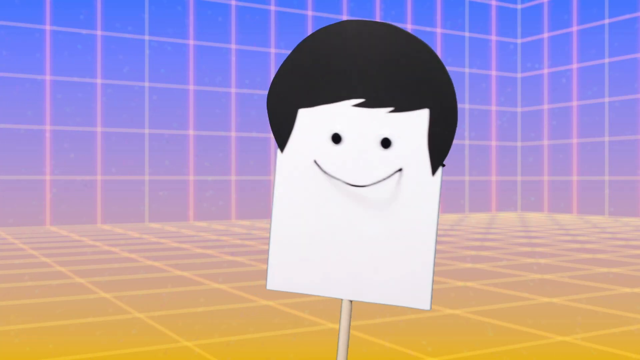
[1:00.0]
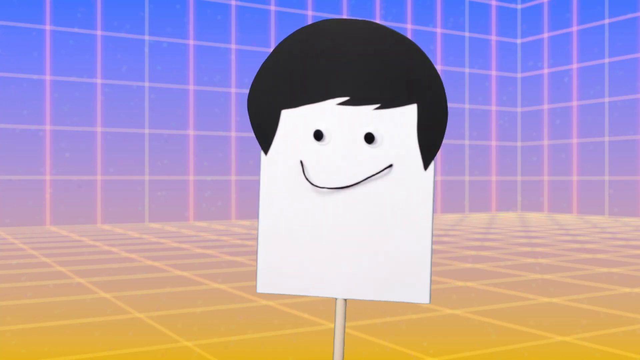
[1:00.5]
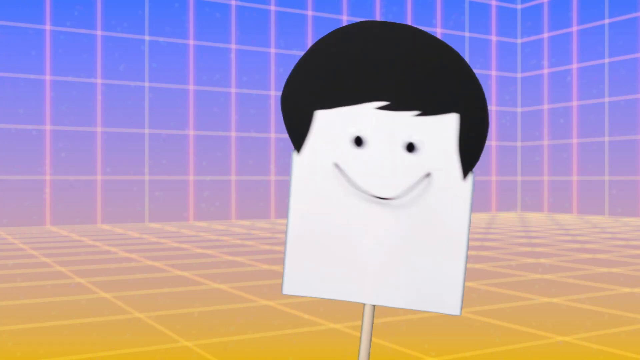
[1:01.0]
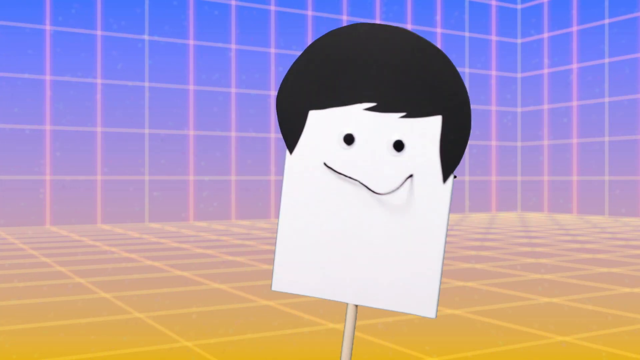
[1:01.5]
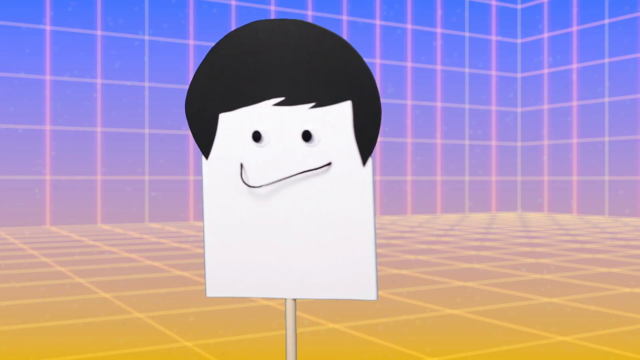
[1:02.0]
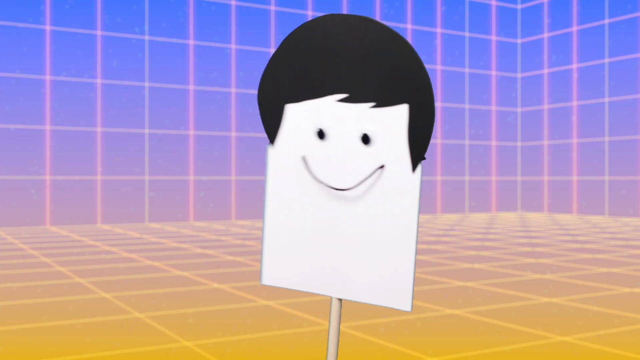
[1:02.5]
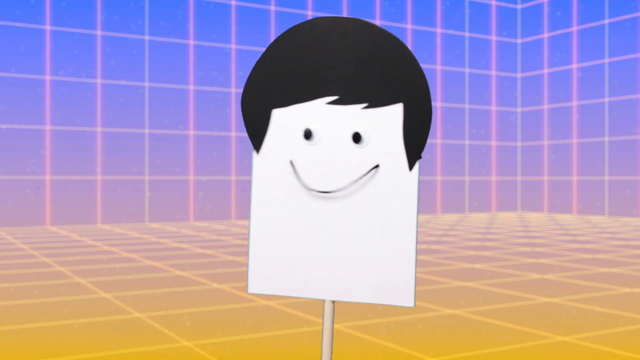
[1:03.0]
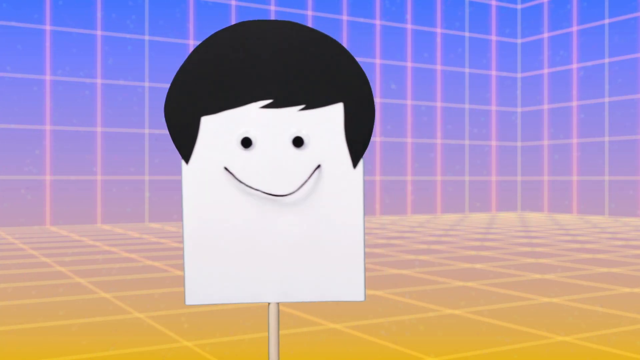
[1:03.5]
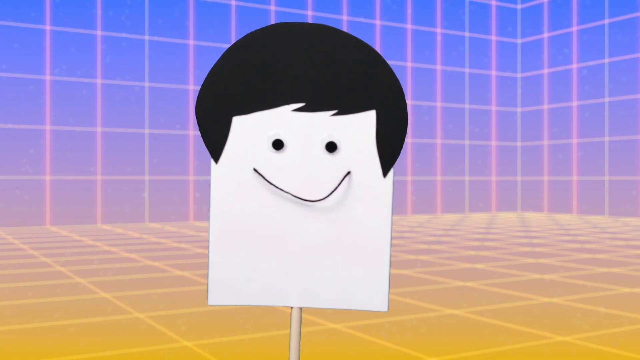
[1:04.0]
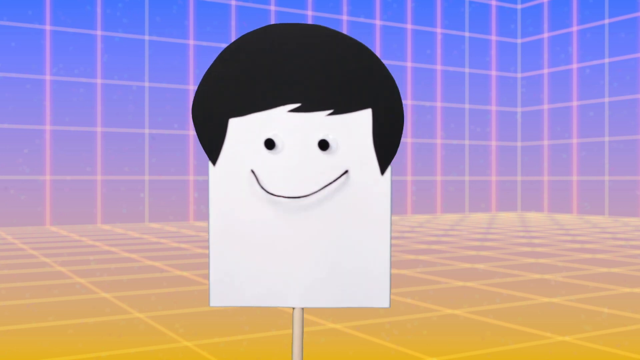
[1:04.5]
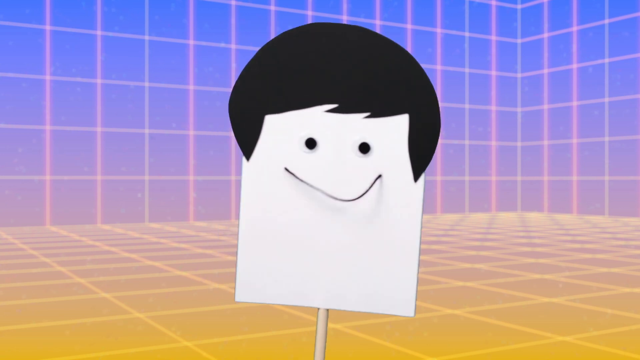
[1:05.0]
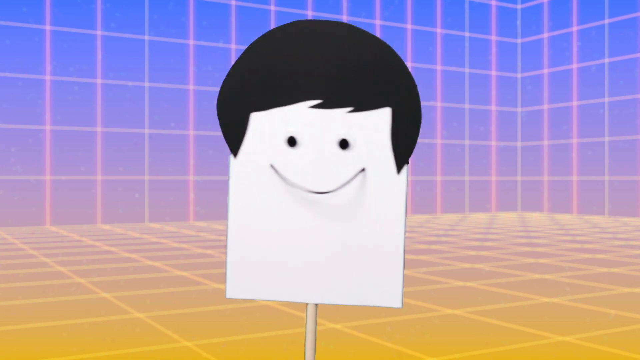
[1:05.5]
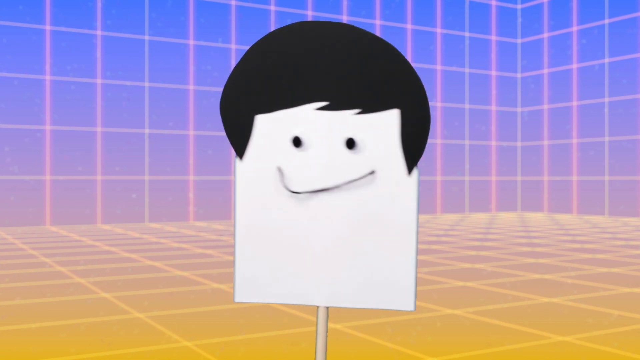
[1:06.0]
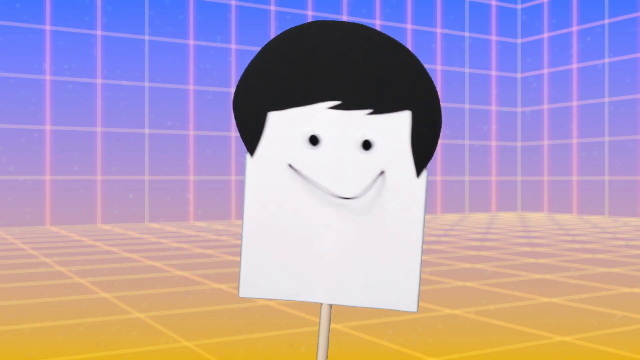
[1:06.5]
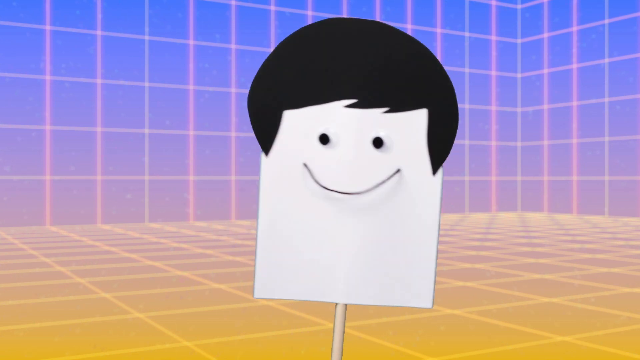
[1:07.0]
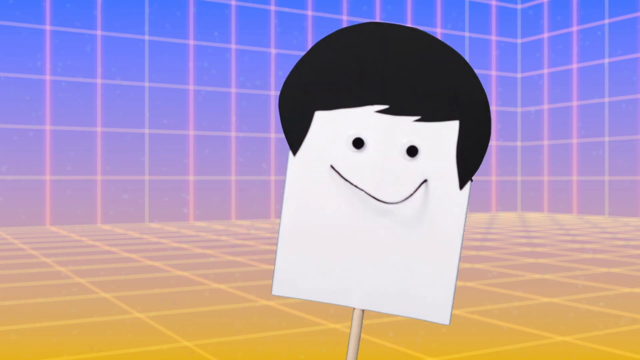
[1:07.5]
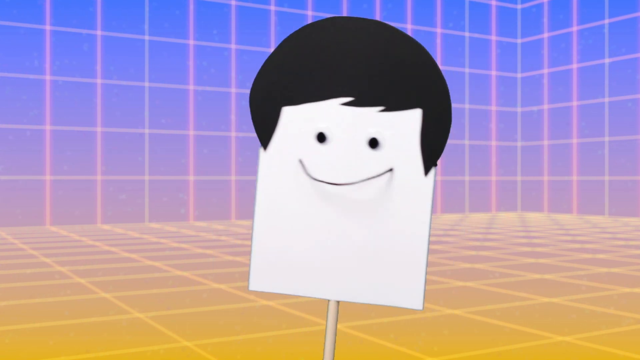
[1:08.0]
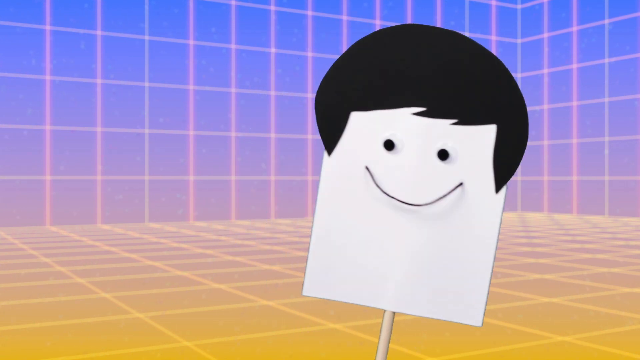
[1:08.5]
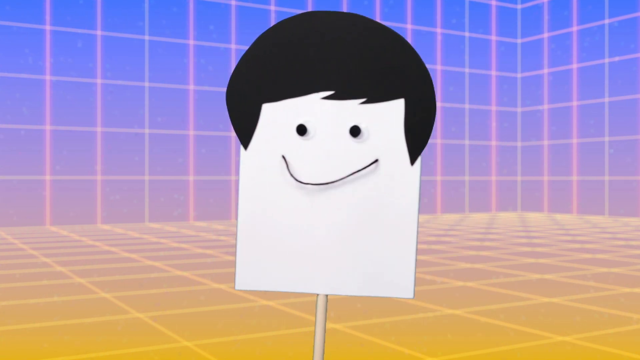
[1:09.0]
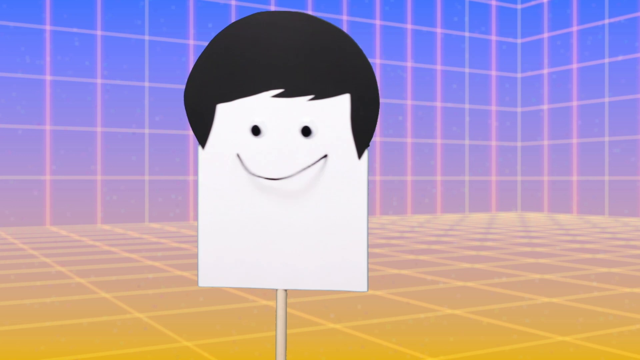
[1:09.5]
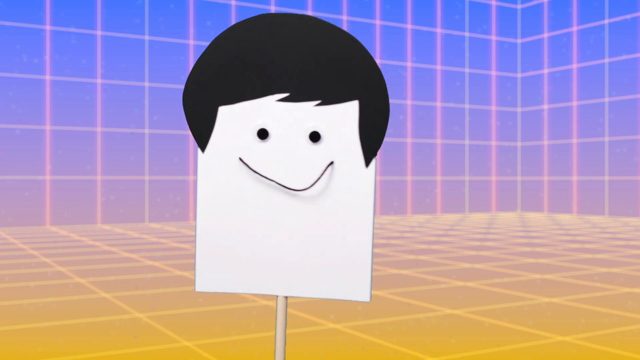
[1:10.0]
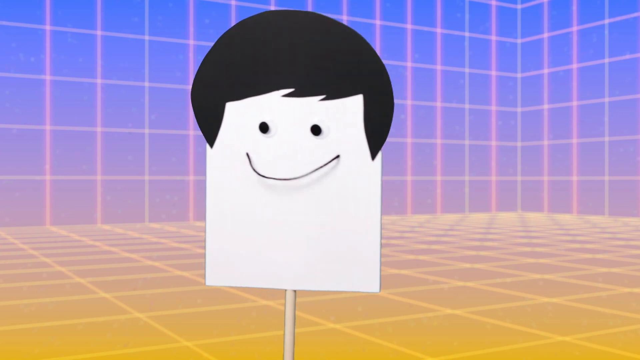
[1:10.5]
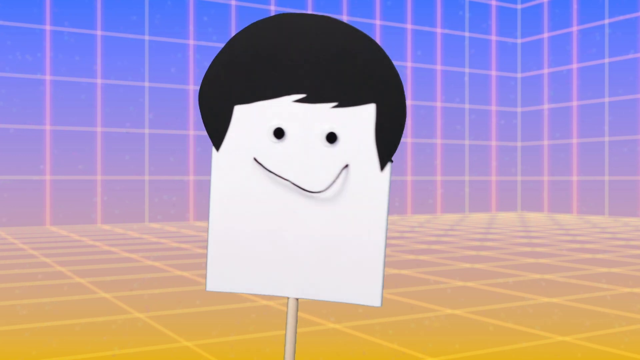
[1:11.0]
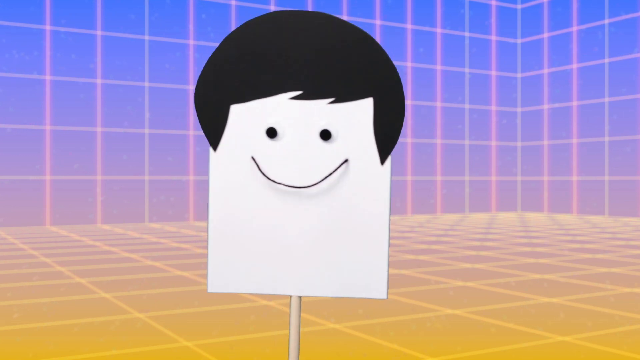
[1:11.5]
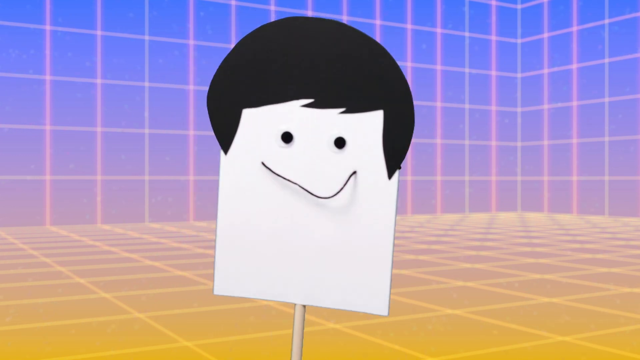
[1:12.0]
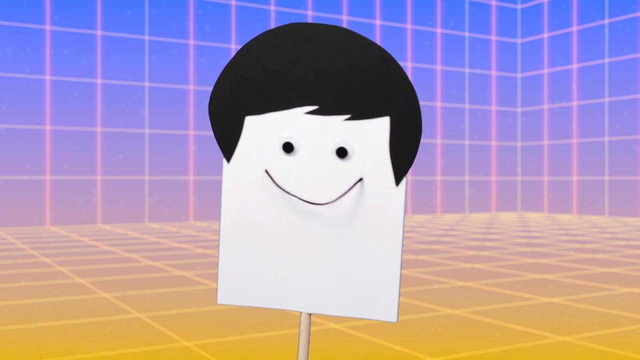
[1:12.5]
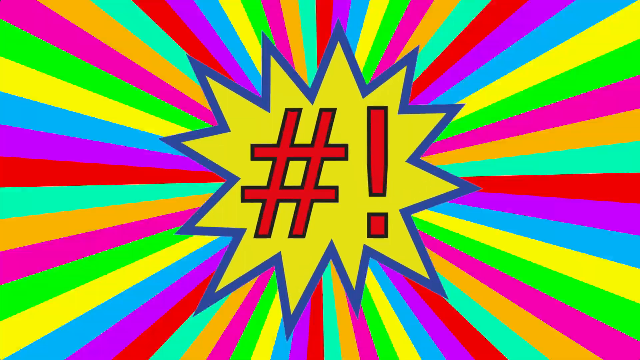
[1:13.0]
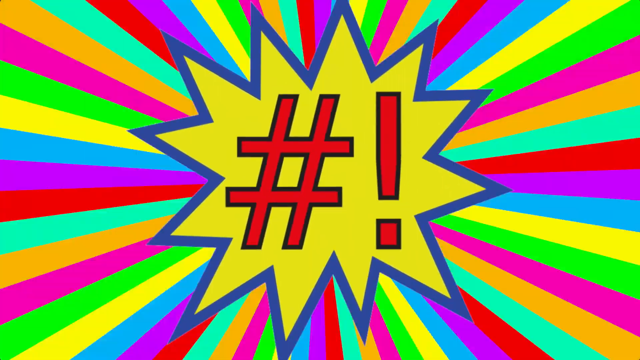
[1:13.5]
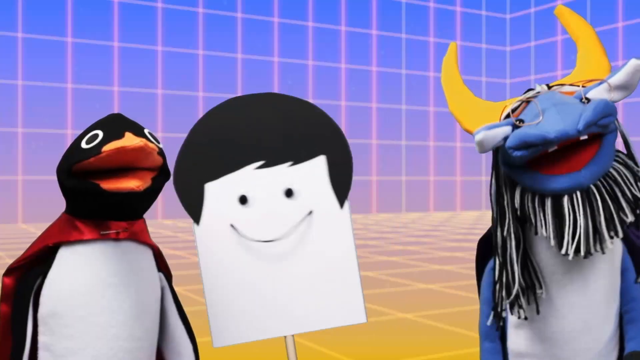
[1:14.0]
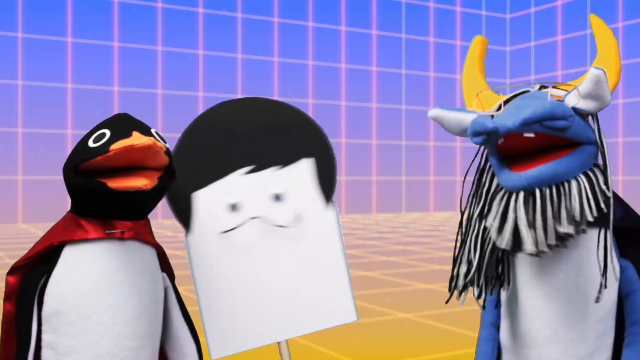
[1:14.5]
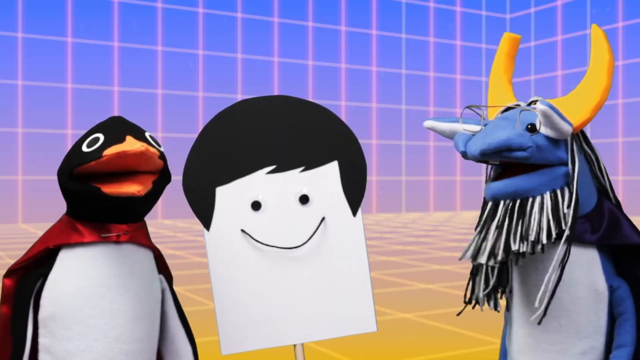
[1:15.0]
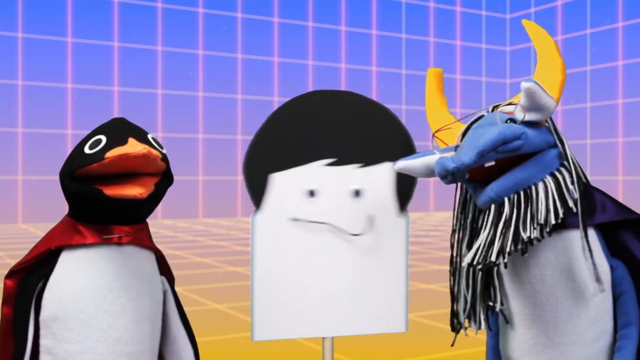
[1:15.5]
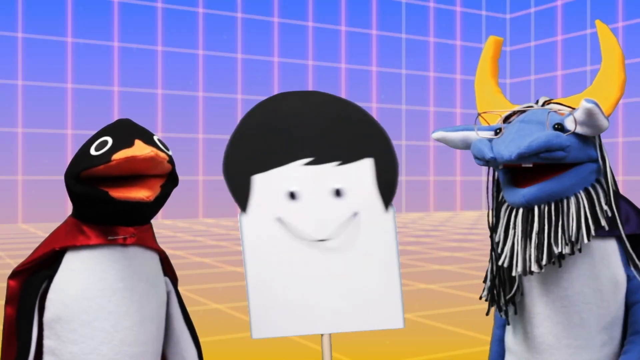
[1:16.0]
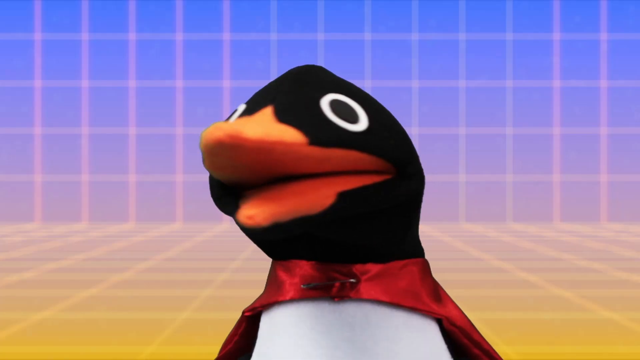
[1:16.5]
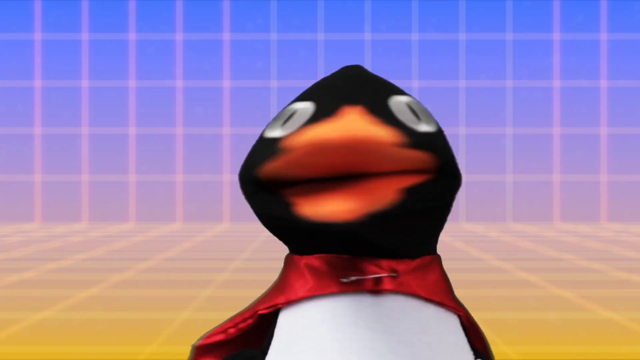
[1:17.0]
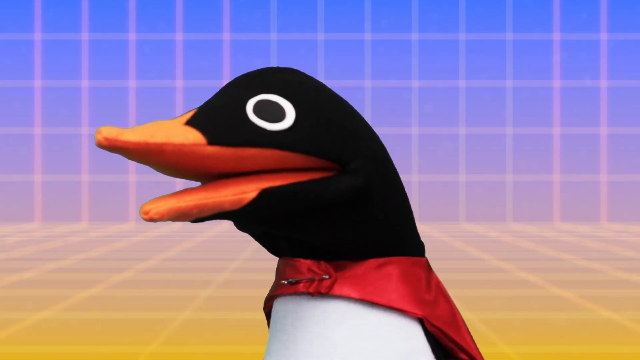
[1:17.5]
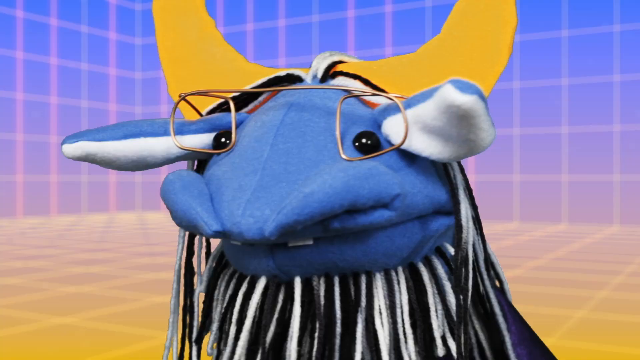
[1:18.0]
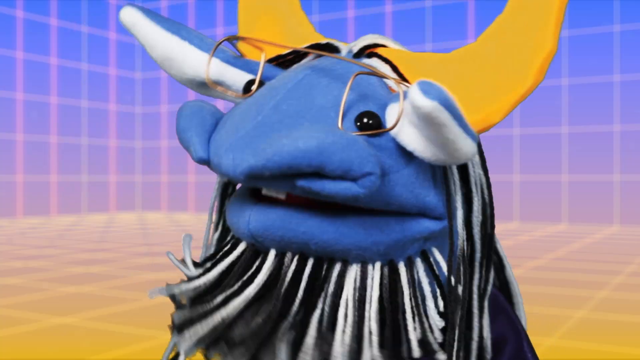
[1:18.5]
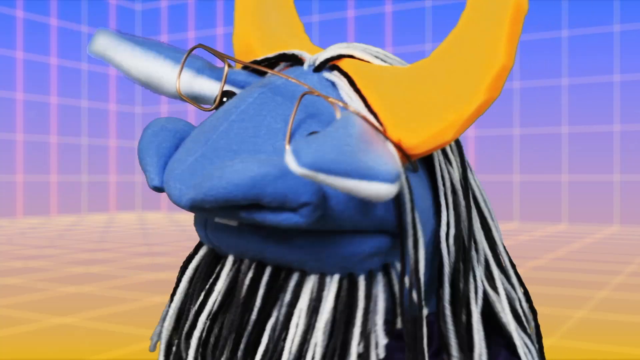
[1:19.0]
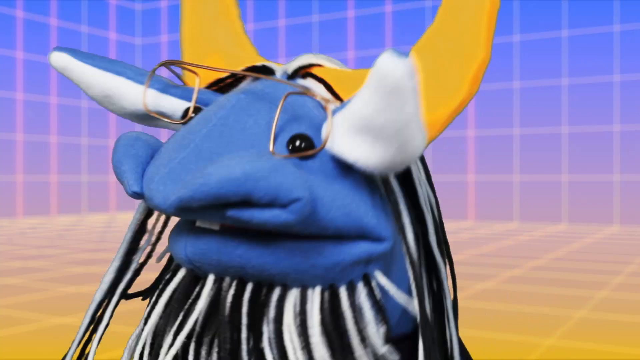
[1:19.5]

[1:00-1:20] The sign returns in the room with grid patterns on the walls and floor. It is being rocked back and forth, so its yarn mouth moves quite a bit; it is mounted on a pole, and its eyeballs even move around a little as it talks. The floor is mostly yellow, a darker yellow with light yellow grid lines, and the walls are purple with pink grid lines. Next, rainbow colors emanate from the center of the screen, and a yellow starburst with a blue outline appears, containing a red pound sign and an exclamation point. Back in the room, the penguin and the gnu stand with the sign mounted on a stick, the penguin on the left and the gnu on the right.